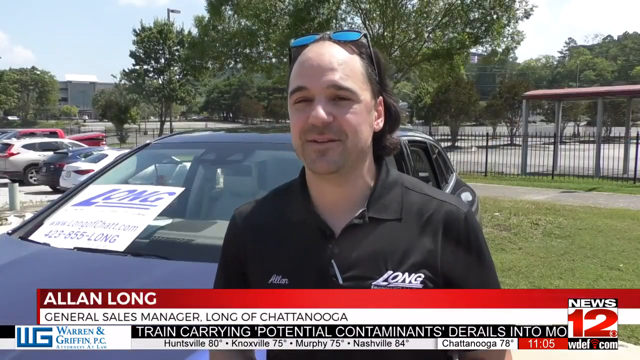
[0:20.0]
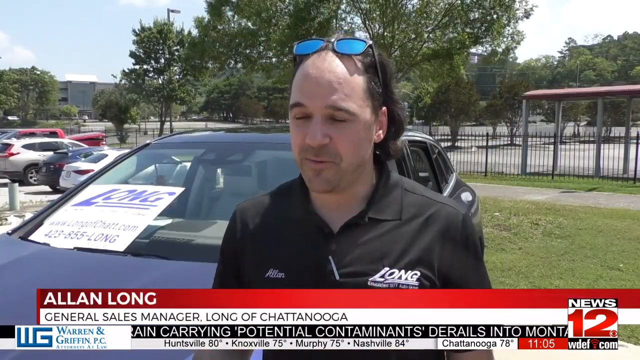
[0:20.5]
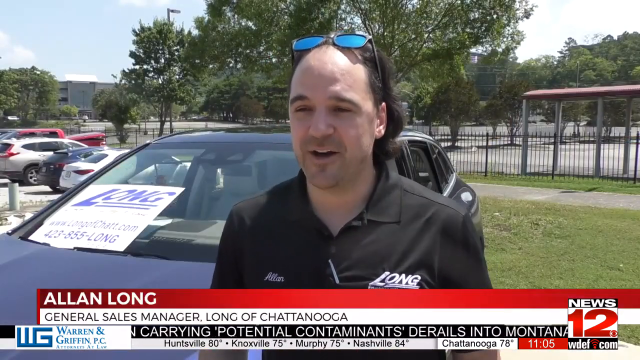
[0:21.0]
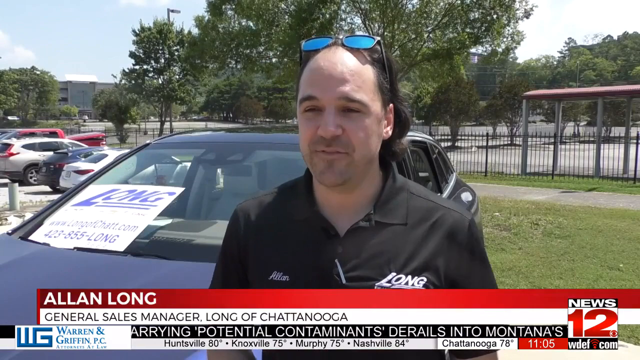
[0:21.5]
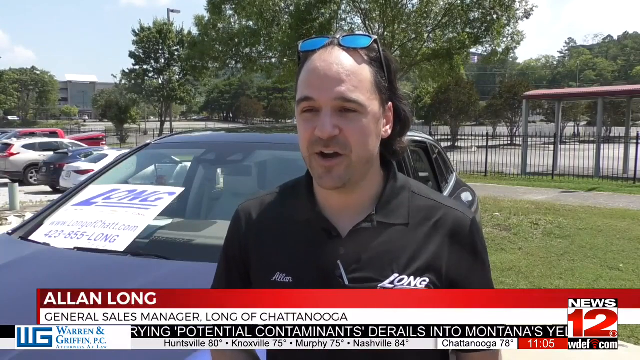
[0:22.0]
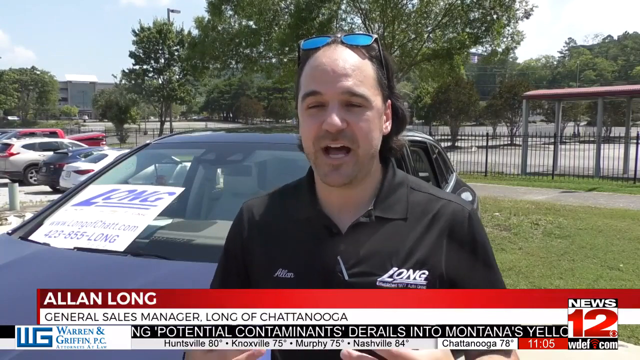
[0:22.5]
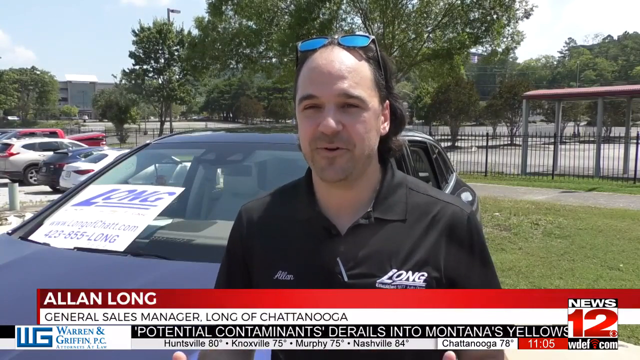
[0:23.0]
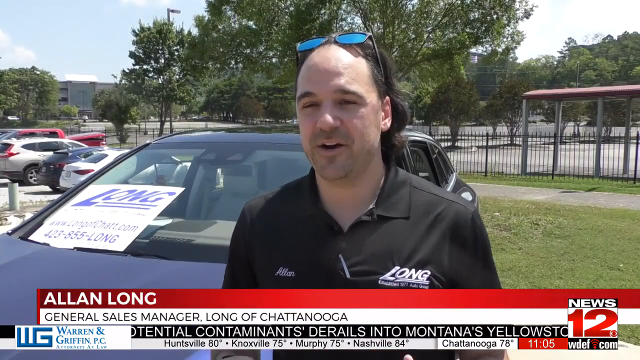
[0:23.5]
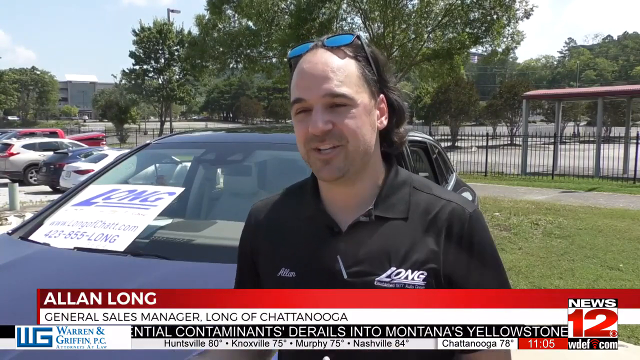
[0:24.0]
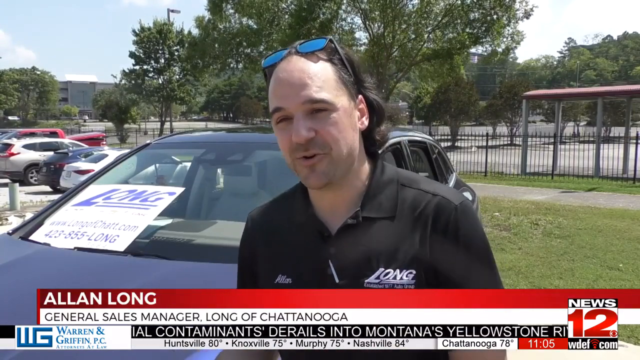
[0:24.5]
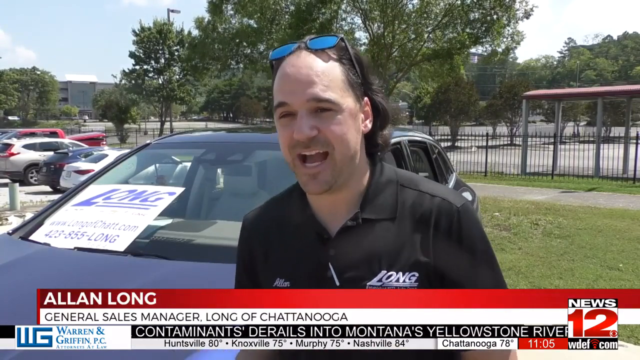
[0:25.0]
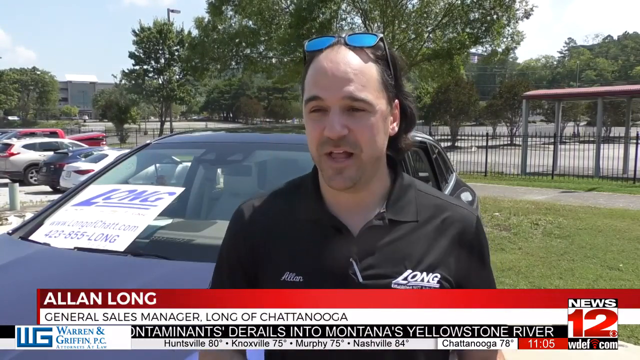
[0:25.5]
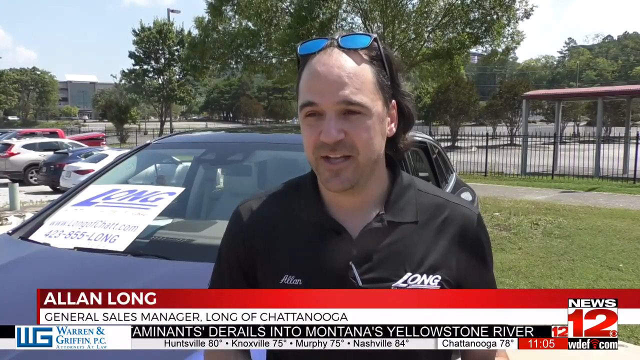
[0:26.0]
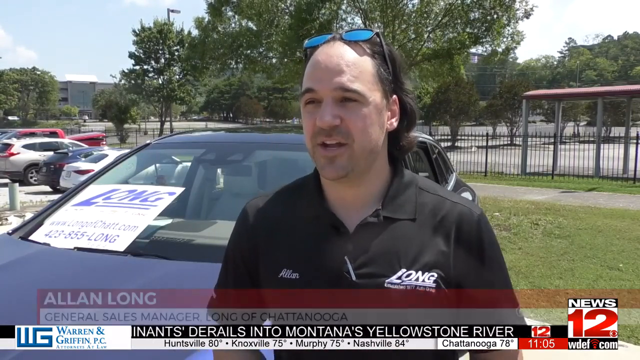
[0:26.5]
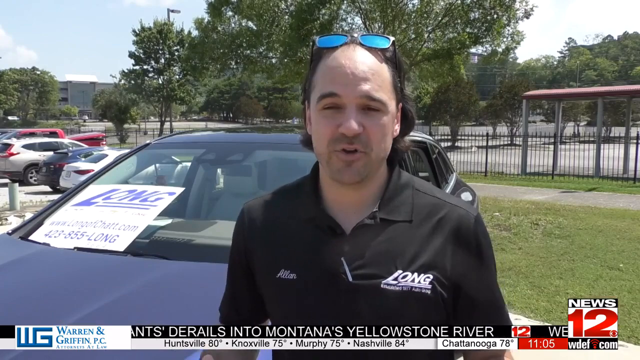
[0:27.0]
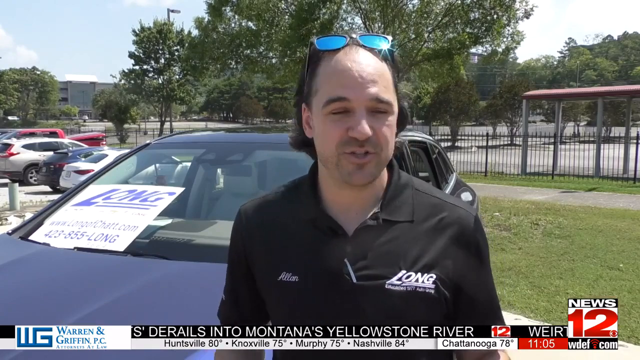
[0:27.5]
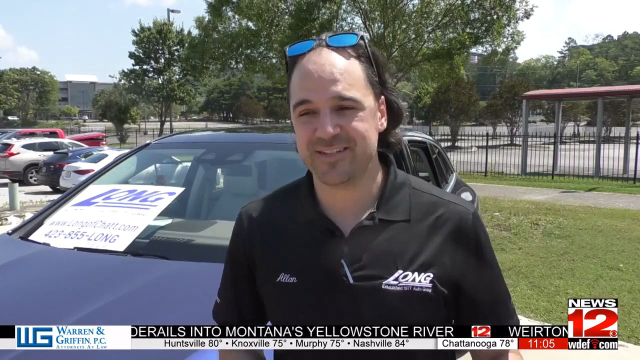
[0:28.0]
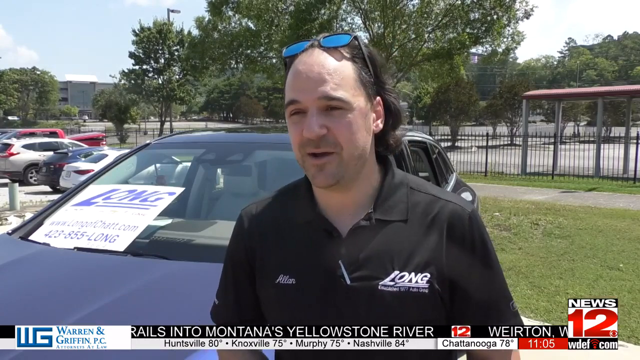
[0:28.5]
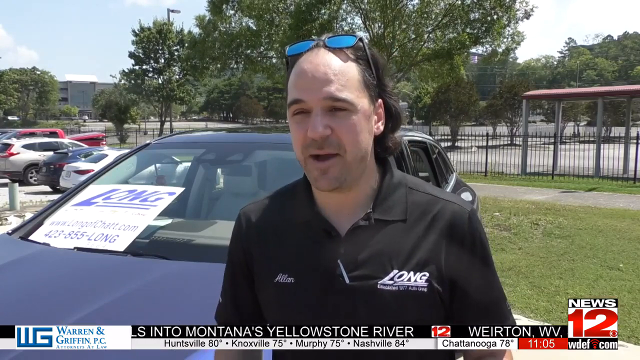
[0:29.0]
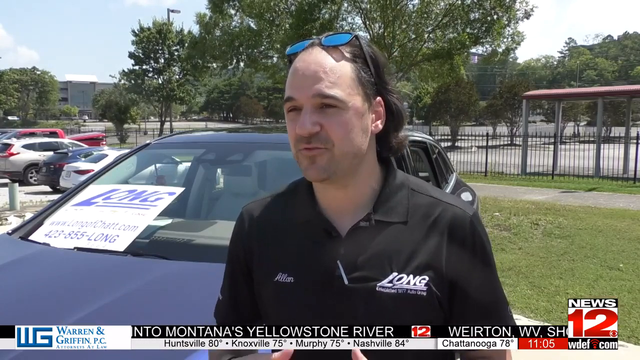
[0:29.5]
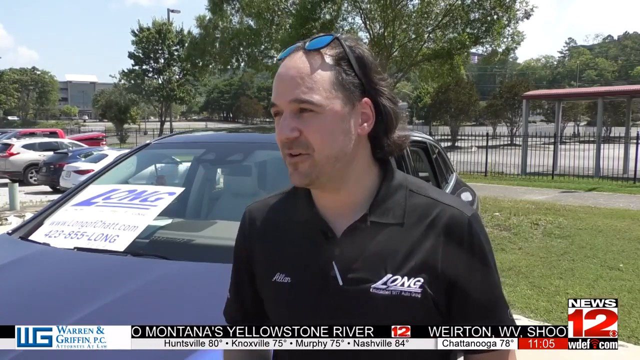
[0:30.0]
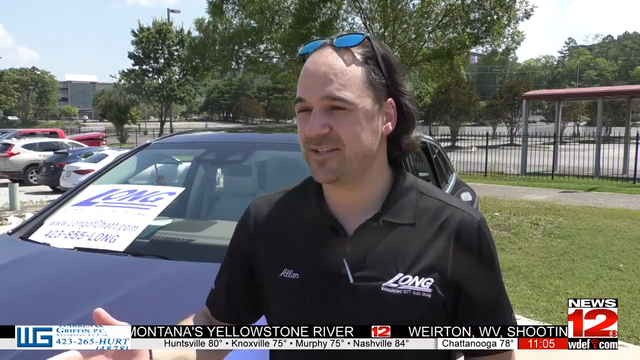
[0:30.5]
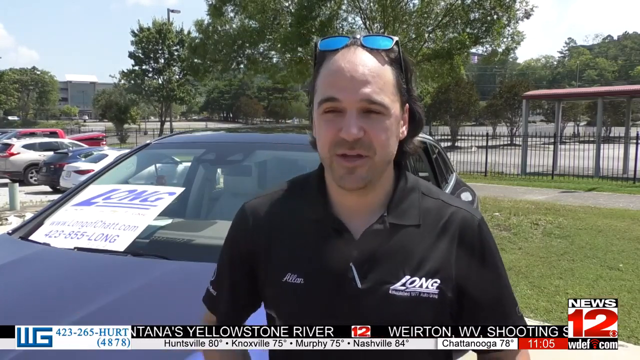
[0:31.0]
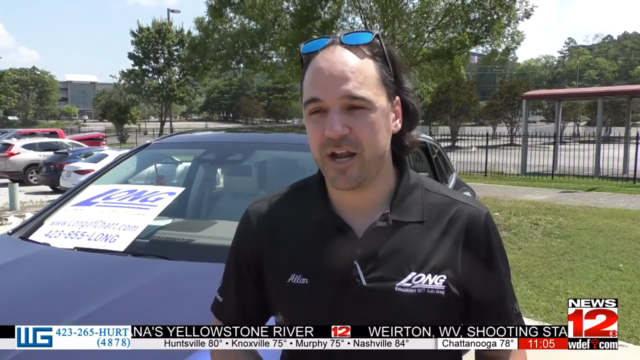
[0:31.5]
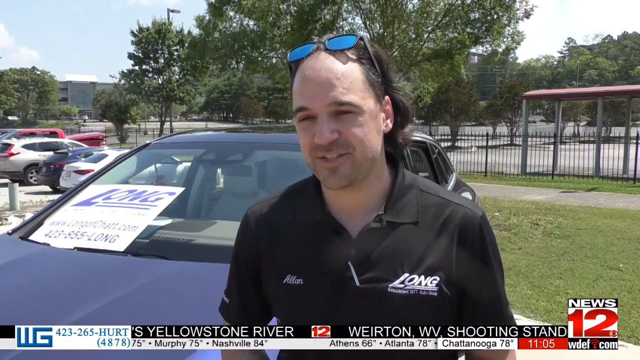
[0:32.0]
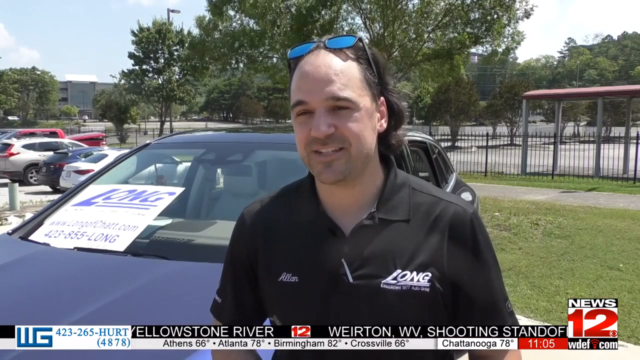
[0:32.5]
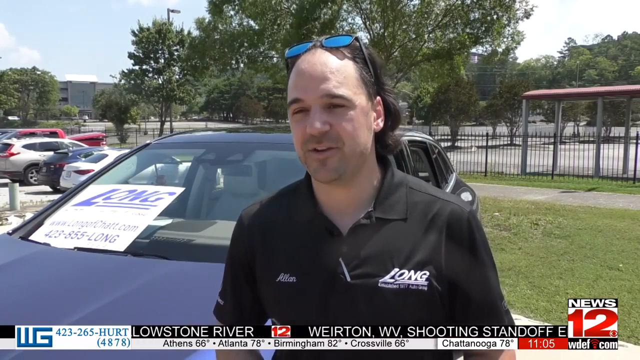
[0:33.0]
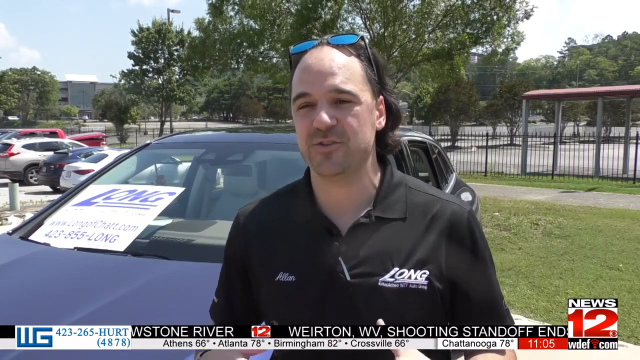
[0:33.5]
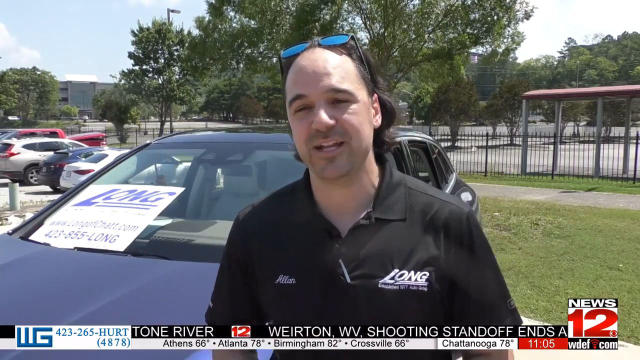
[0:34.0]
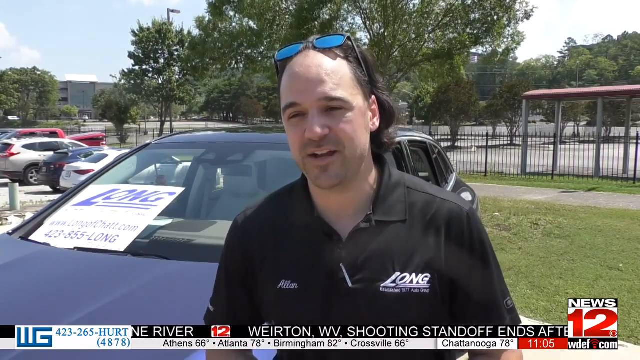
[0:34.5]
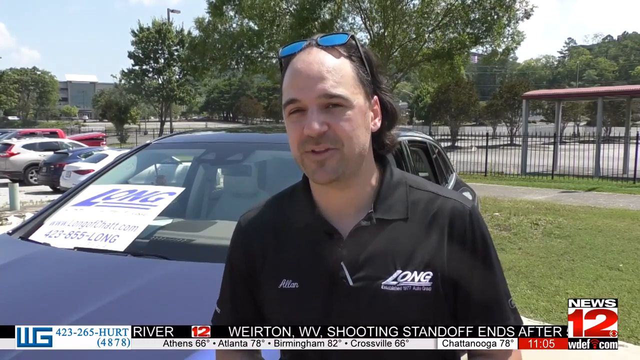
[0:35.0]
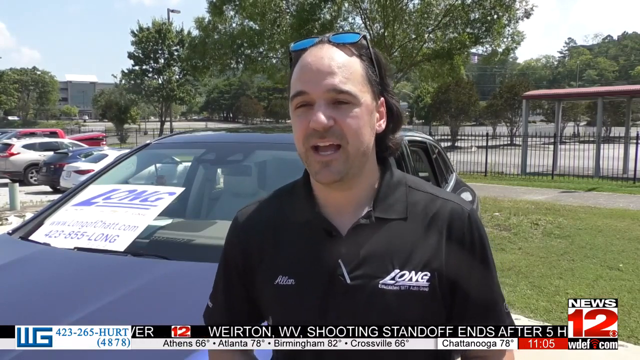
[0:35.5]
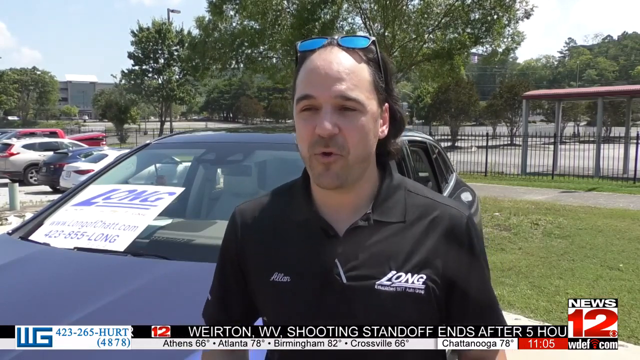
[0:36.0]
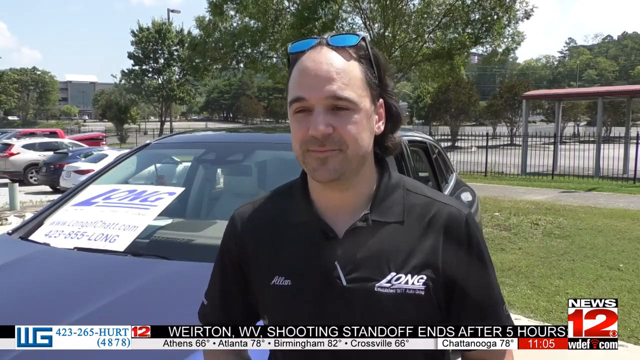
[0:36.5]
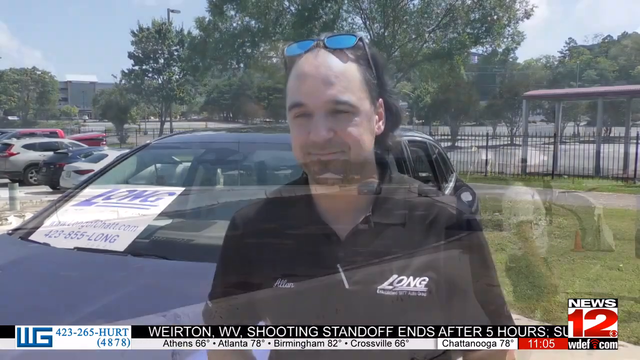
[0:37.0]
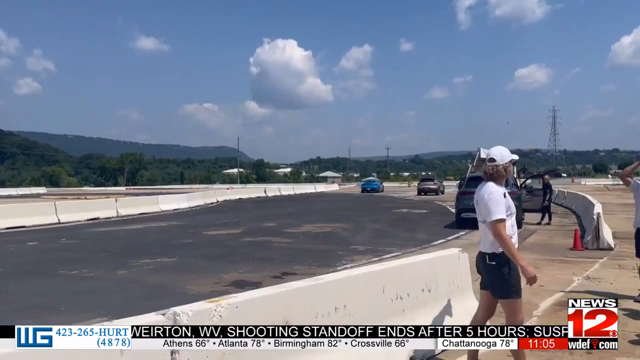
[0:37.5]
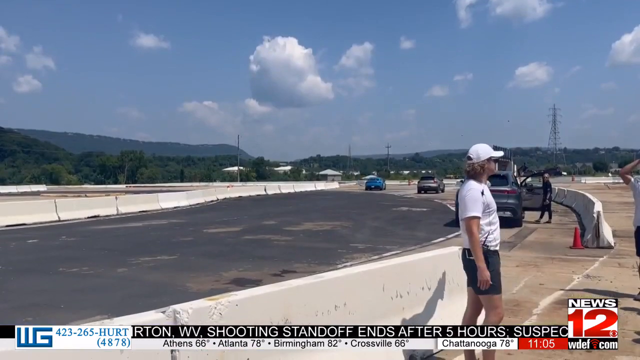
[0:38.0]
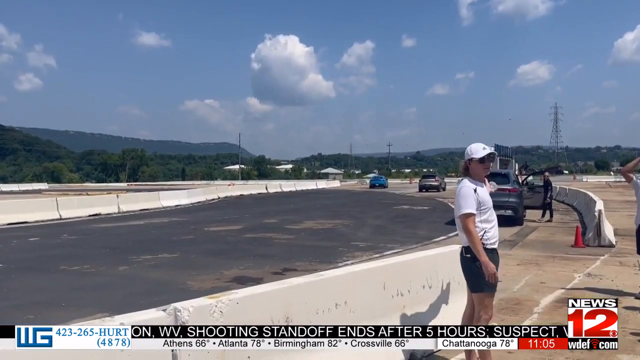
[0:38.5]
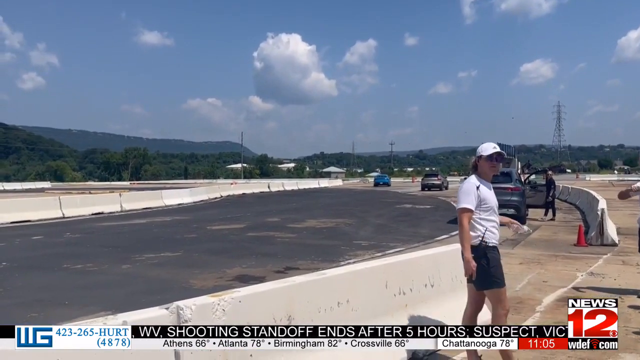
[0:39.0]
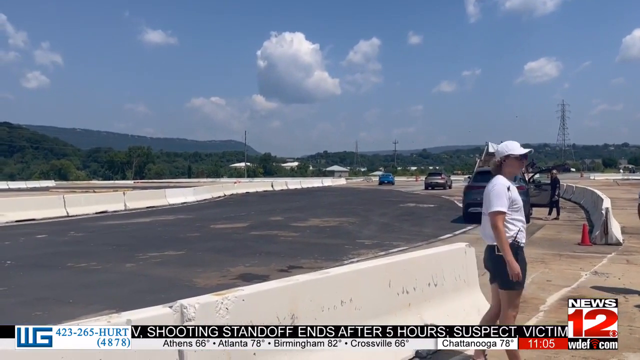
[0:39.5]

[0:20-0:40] Alan Long, the sales manager at Long's, is interviewed and talks. A quick shot then cuts to a place that is possibly a test track, with mountains in the background. About ten tents are set up there, and high-intensity wires are visible in the distance. A guy in a white baseball cap and a white shirt is standing there, and somebody is getting into a car, probably for a test drive. News 12 is recording the event.